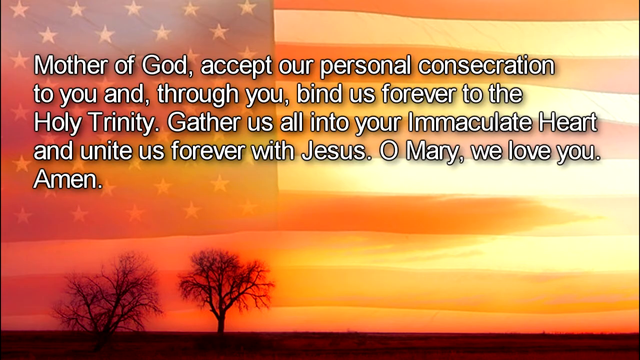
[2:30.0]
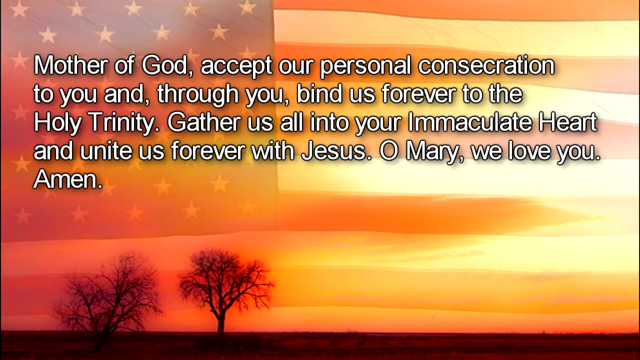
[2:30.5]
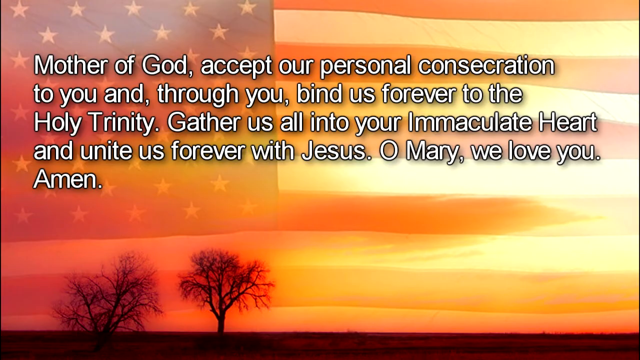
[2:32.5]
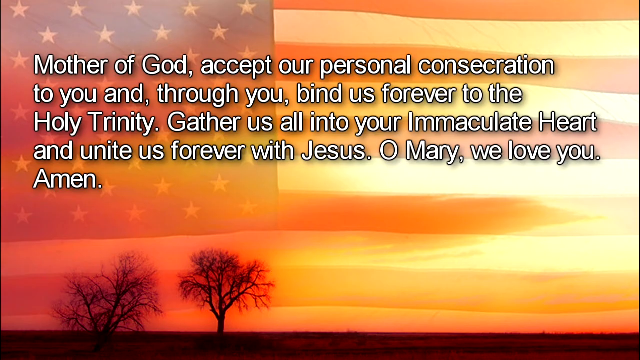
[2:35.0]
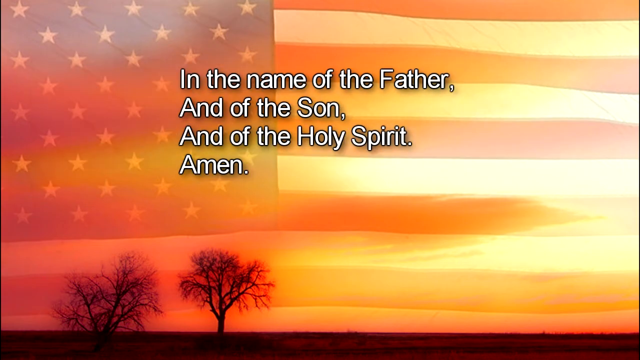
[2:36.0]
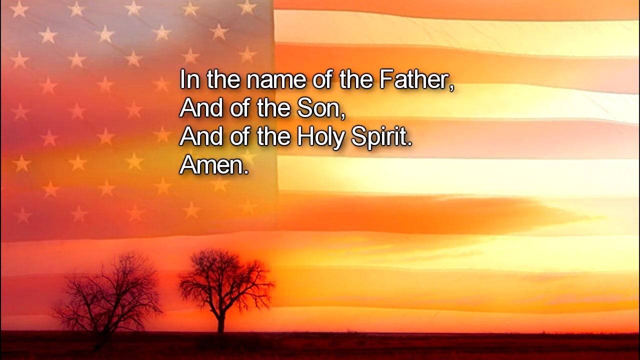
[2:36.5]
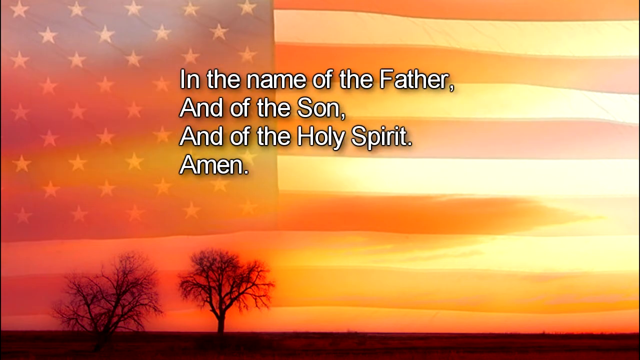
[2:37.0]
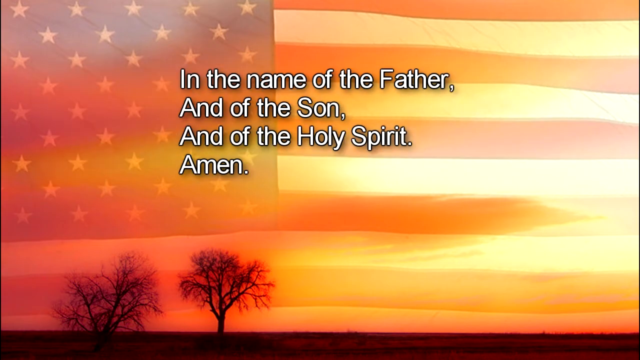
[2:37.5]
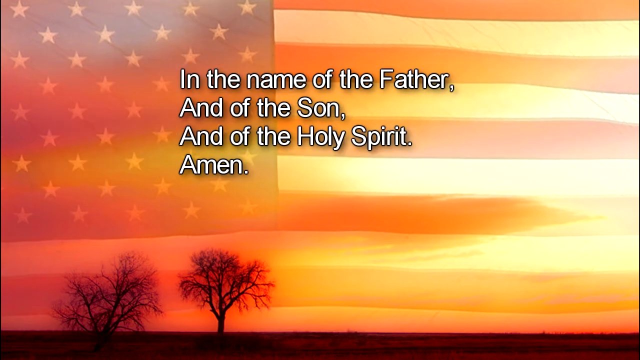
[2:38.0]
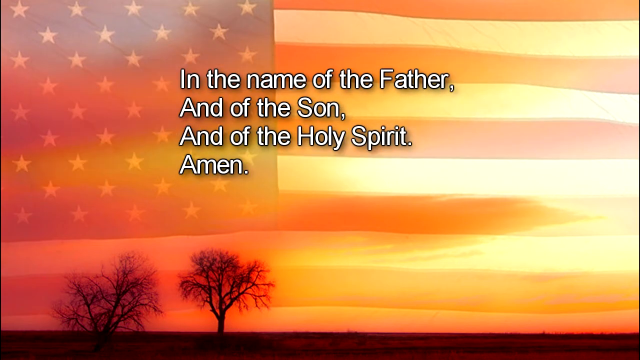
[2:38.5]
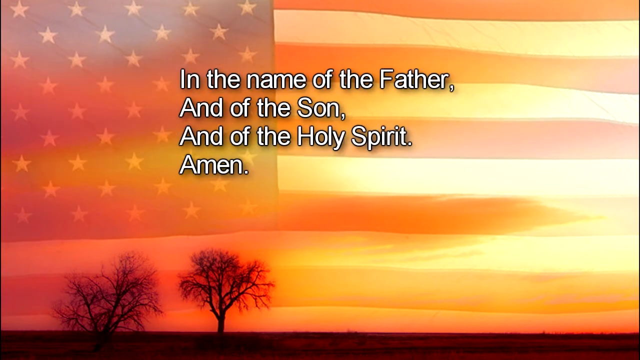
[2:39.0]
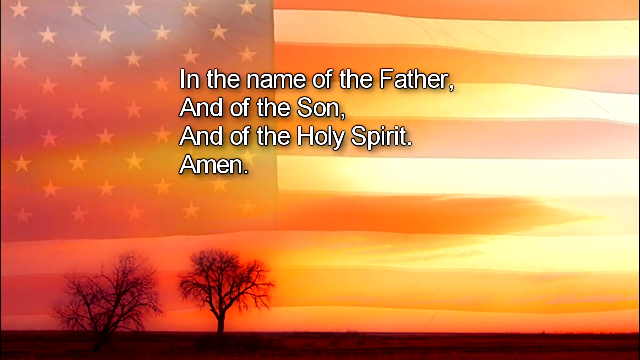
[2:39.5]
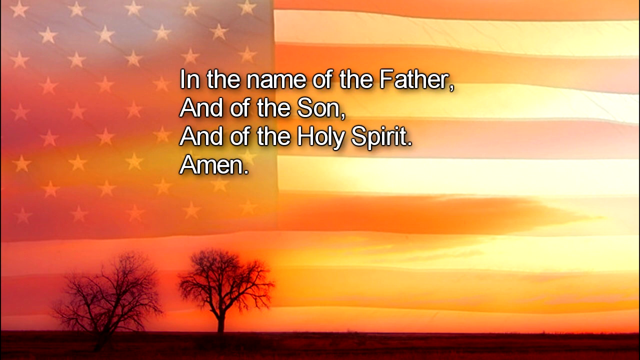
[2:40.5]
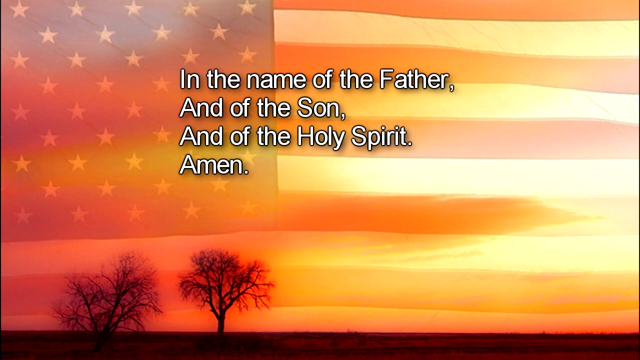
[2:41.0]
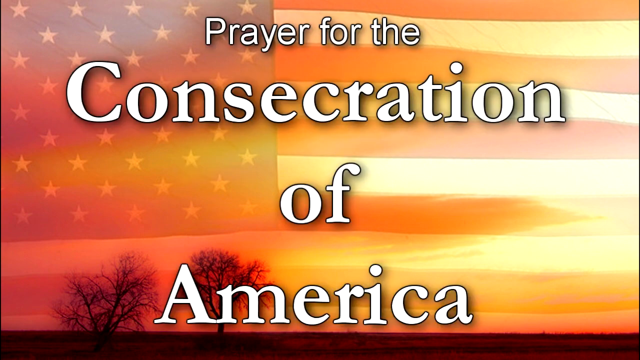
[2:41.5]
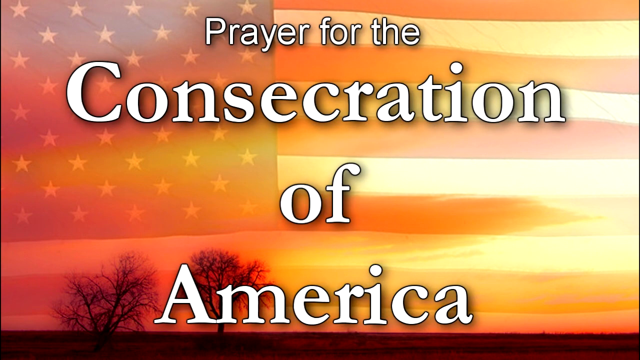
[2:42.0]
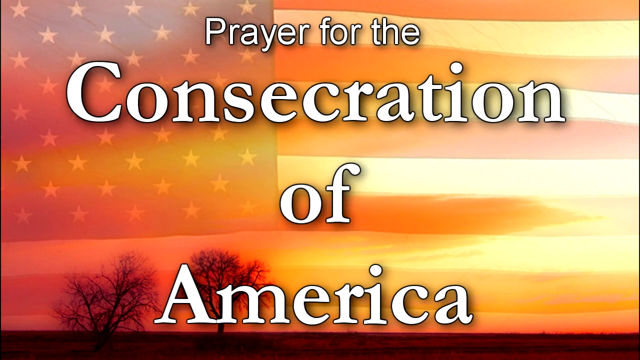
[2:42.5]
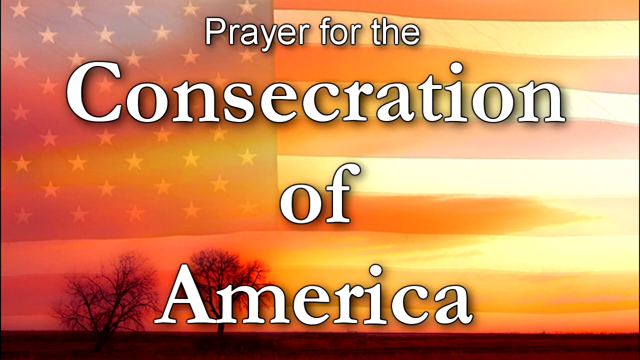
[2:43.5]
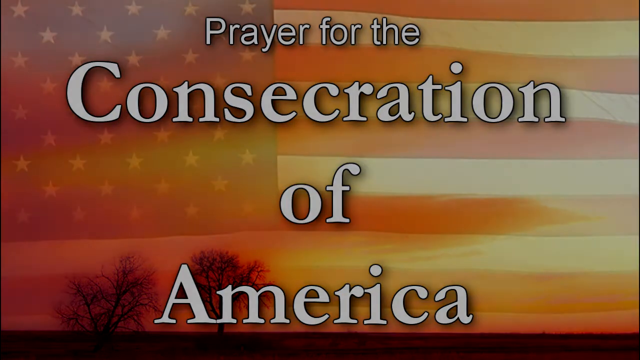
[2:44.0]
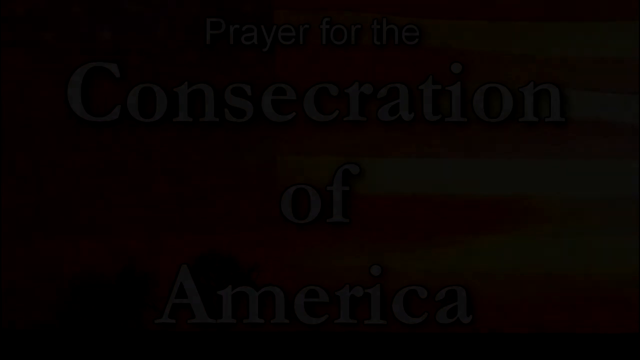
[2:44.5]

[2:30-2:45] A prayer is placed on top of an American flag in the background, in white font lined with black, reading "mother of god accept our personal consecration to you and through you bind us forever to the holy trinity gather us all into your immaculate heart and unite us forever with jesus oh mary we love you amen." The flag shows the stars in the upper left-hand corner on a navy square or rectangle, and the stripes start at the top on the right, alternating red and white. The stripes blend into the area where two trees are at the bottom on the left, and the trees kind of blend in with the red of the stripes.